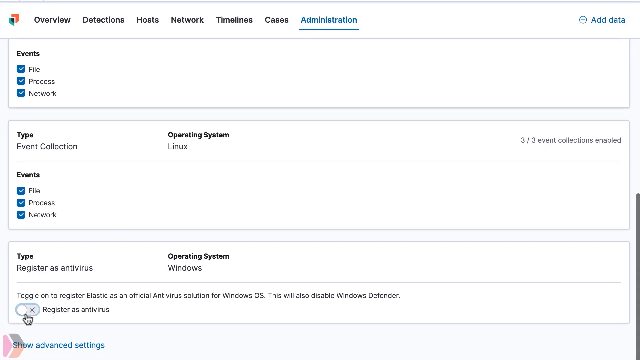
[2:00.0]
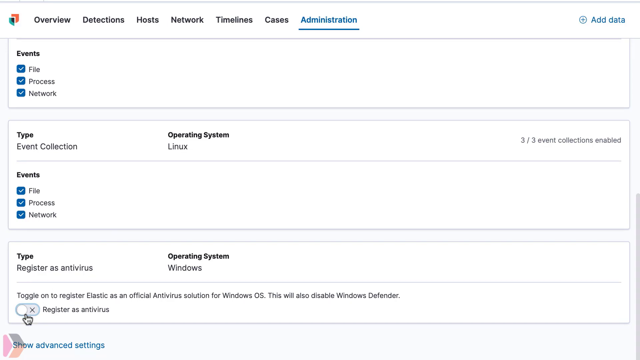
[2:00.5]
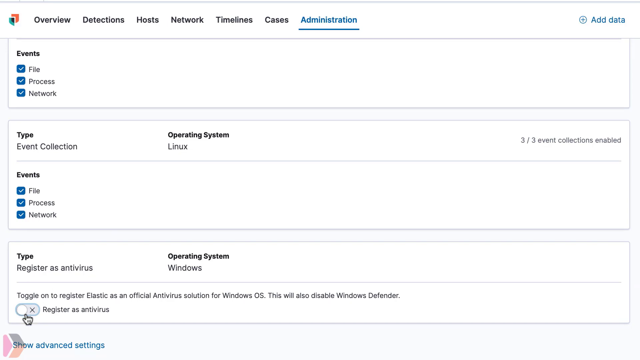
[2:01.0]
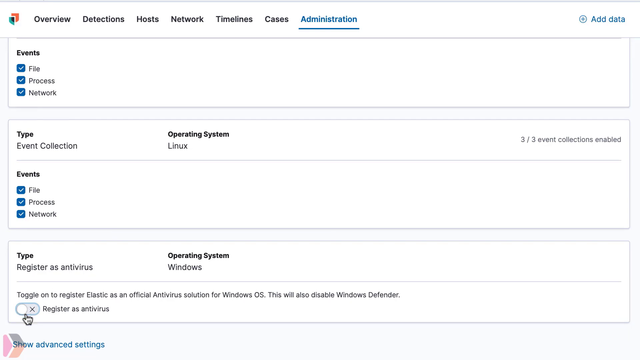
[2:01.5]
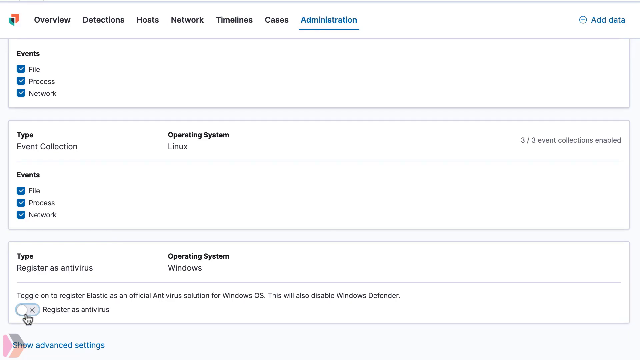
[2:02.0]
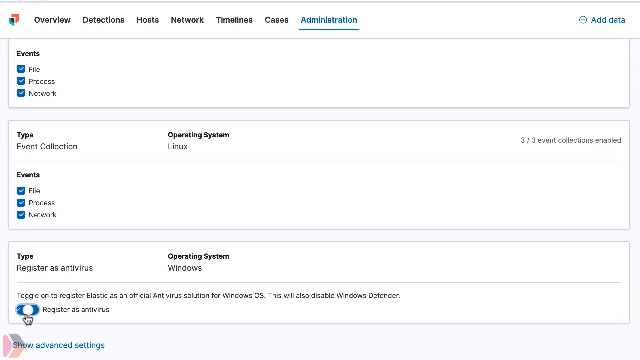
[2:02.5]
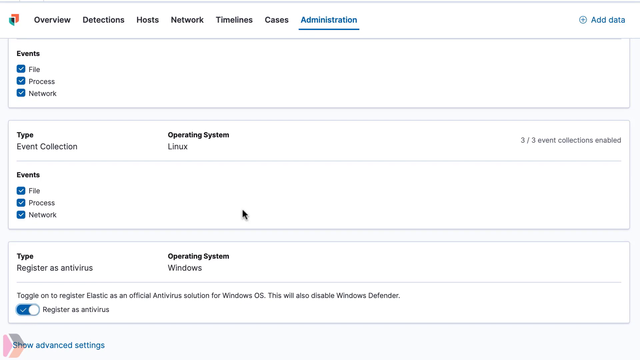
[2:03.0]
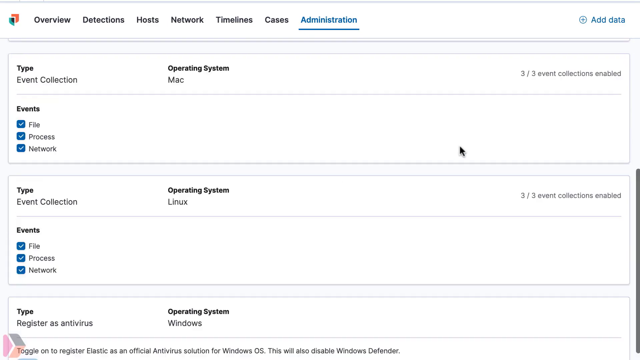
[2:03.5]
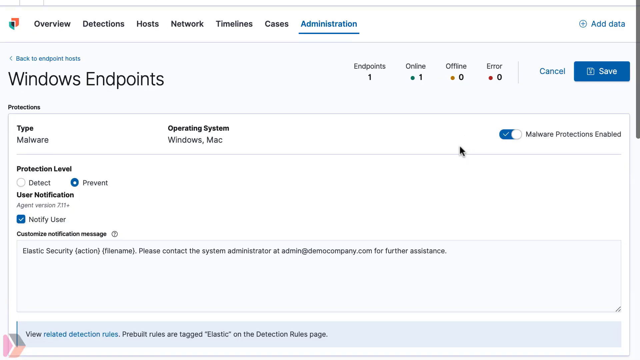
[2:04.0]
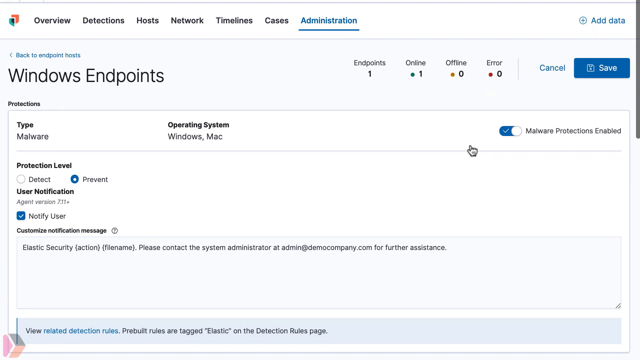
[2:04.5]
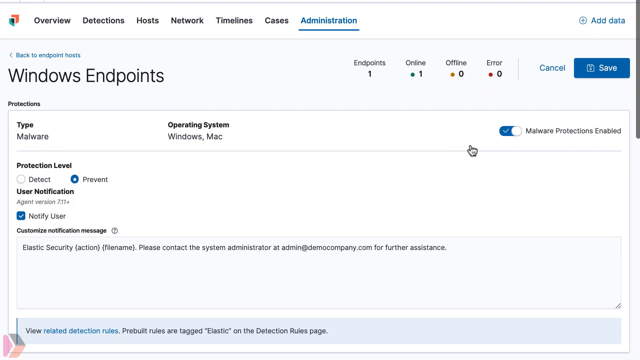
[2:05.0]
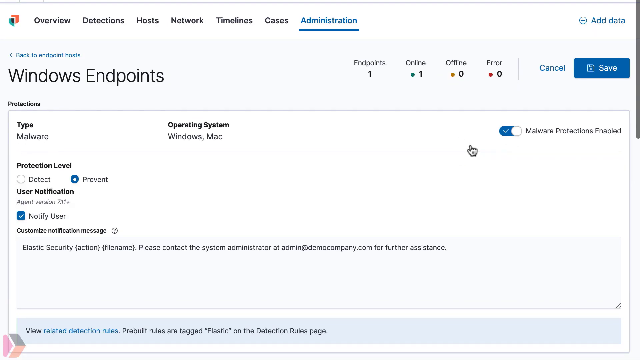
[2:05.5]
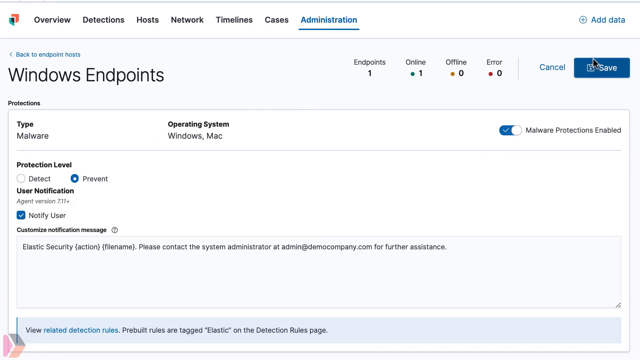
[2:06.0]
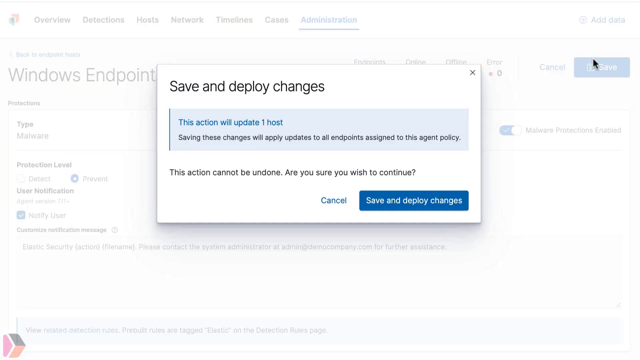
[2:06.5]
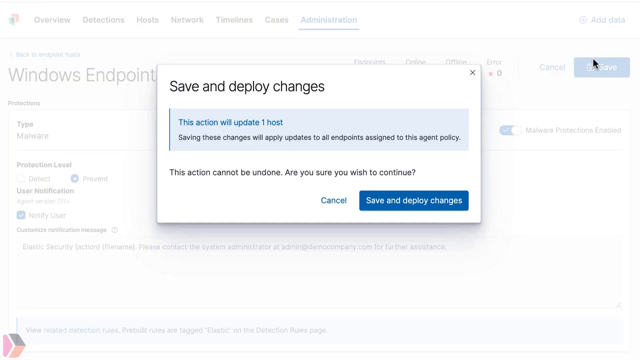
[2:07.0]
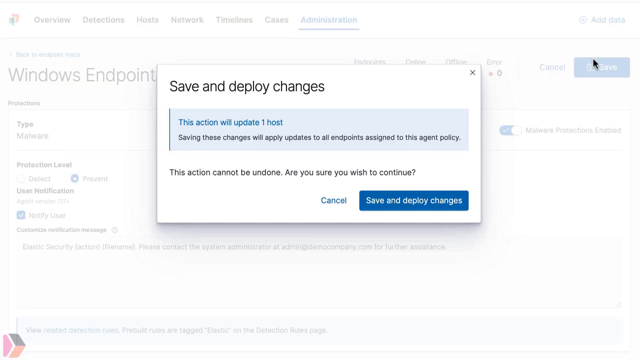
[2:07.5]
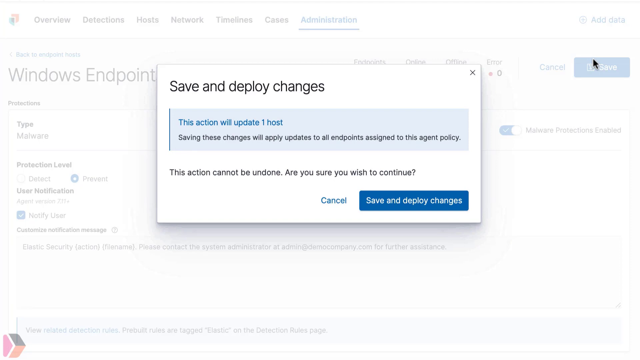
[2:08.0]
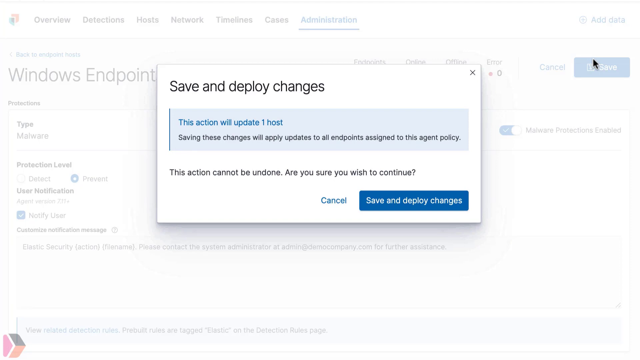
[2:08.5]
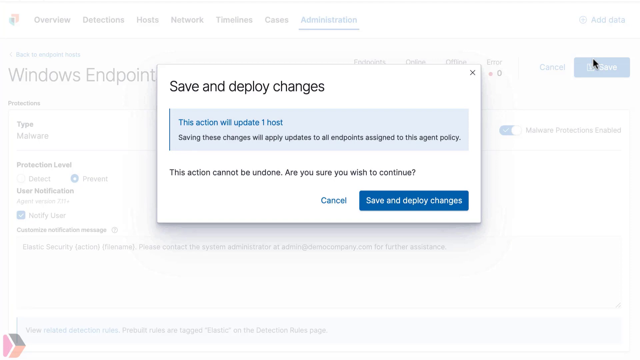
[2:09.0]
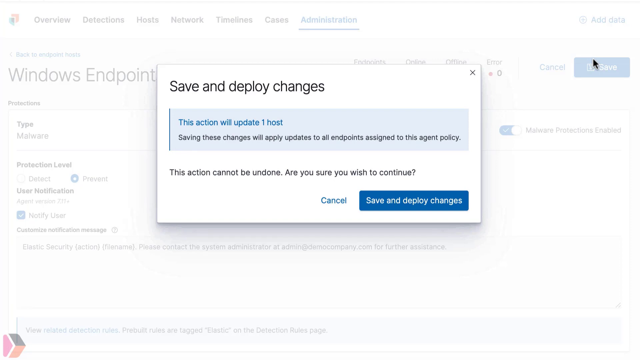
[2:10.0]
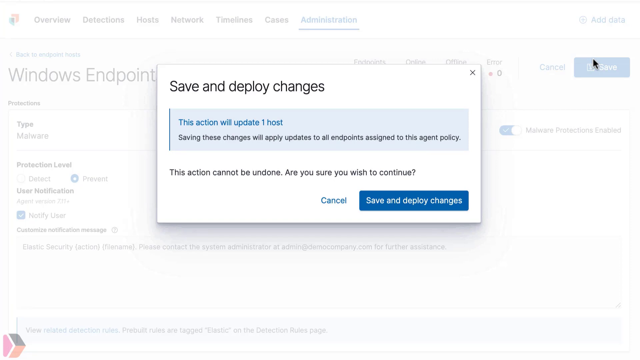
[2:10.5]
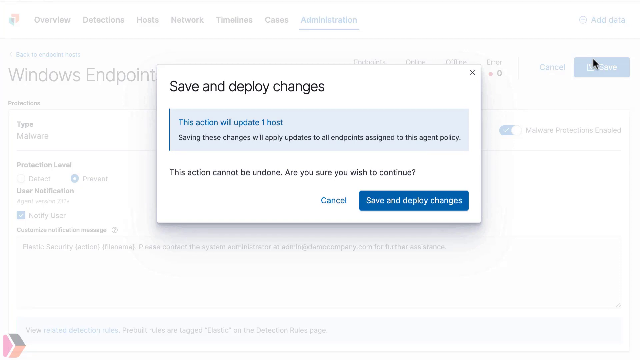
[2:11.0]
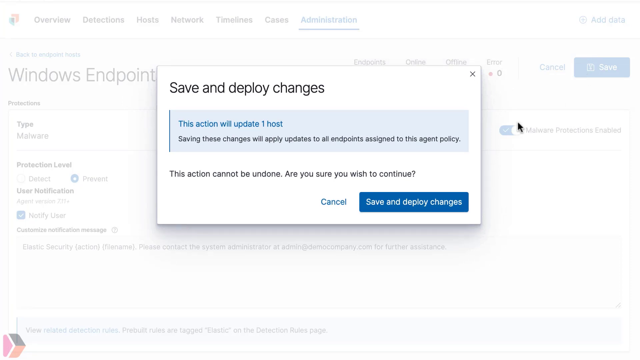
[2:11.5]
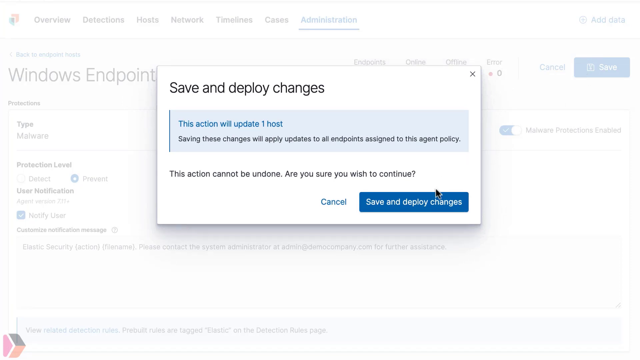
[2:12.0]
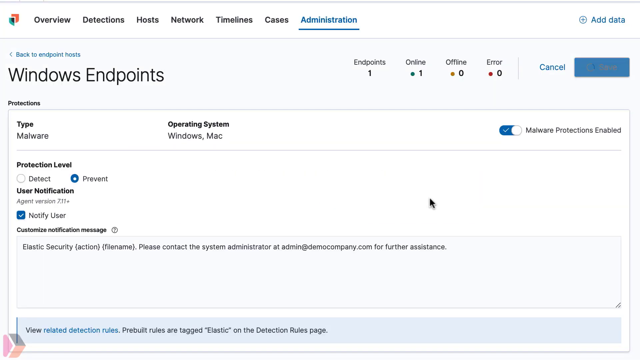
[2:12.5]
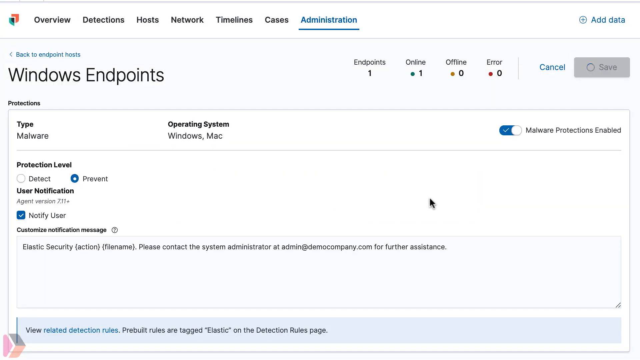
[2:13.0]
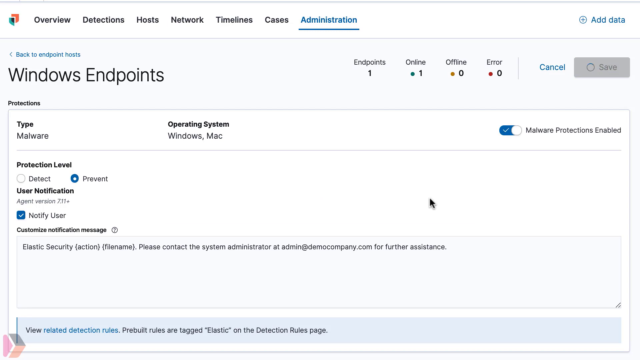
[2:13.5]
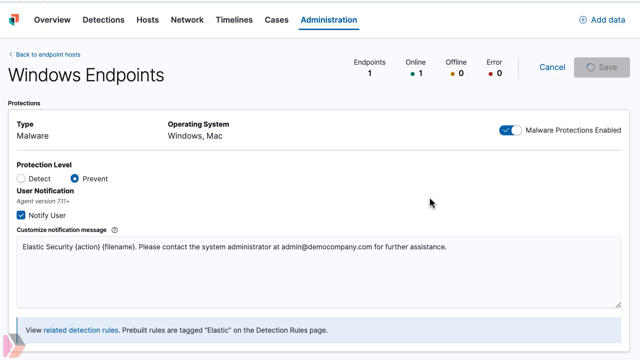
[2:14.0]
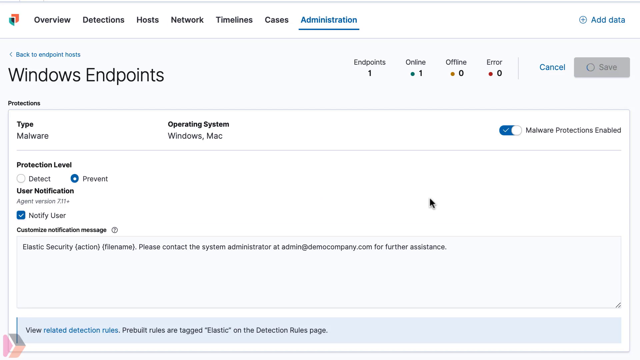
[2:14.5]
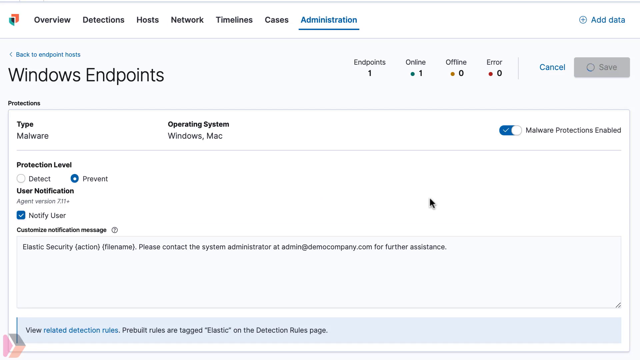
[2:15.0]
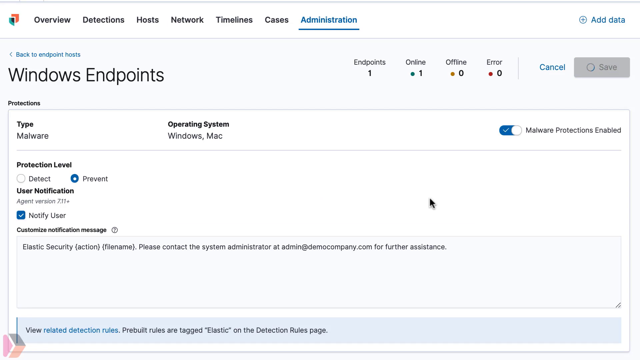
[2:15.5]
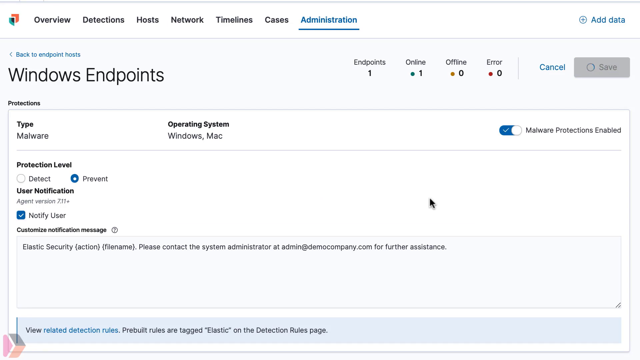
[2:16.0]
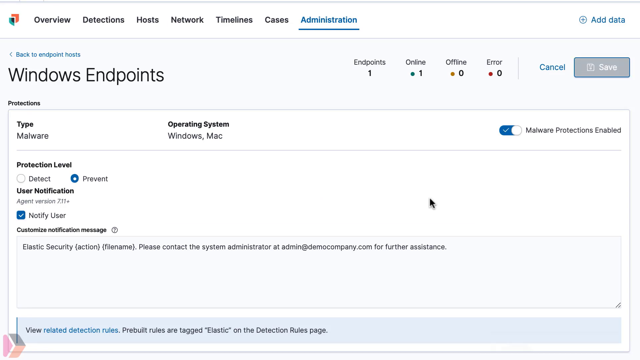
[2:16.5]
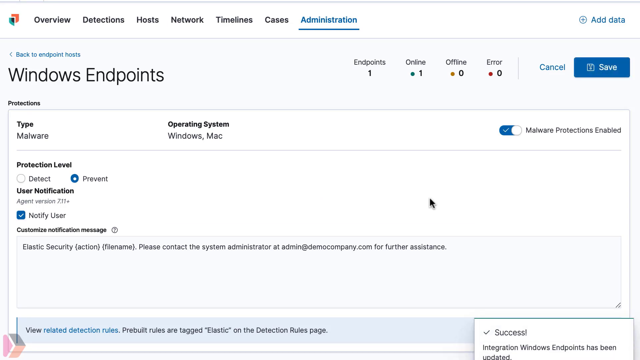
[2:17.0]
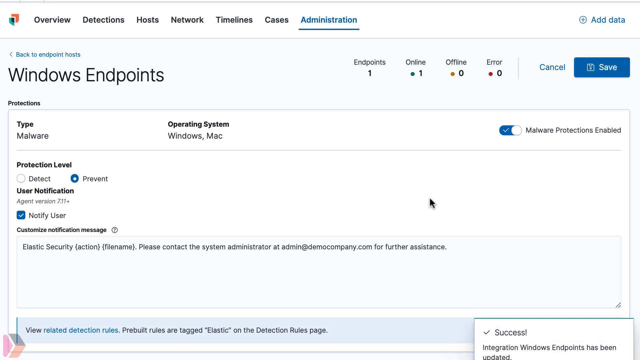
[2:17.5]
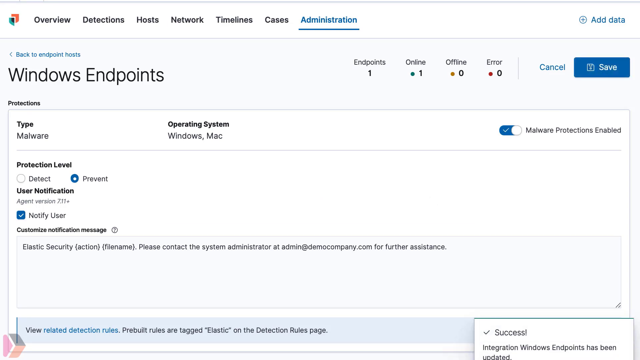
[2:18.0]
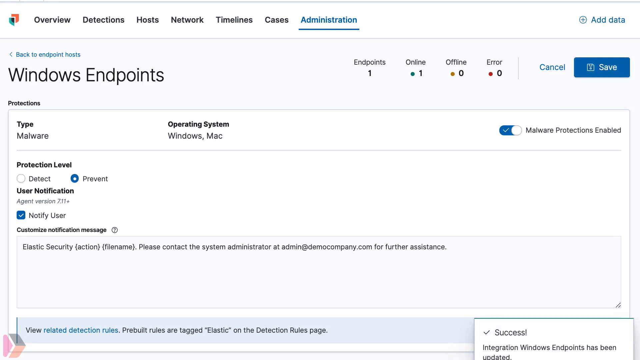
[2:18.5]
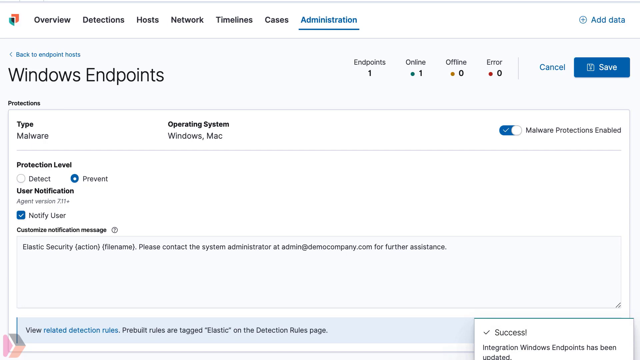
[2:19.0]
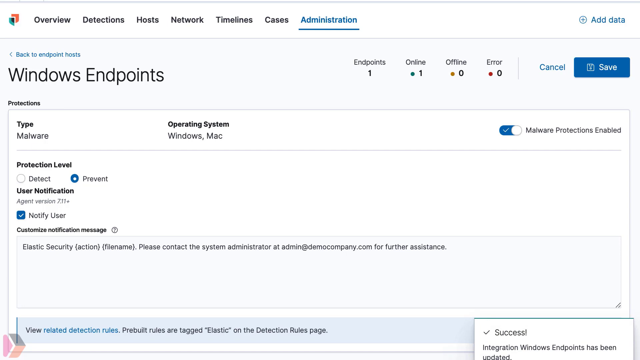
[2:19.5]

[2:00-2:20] The view scrolls back up very fast, and a box pops up titled "save and deploy changes", still on the administration tab. The box reads "this action will update one host. Saving these changes will apply updates to all endpoints assigned to this agent policy. This action cannot be undone. Are you sure you wish to continue?" Below is the word "Cancel" in blue letters, with a capital C and the rest lowercase, and to its right a solid blue rectangle with white words reading "save and deploy changes". The box has a small X in the top right corner. He clicks save, which leads to the next area showing type malware, operating systems Windows and Mac. At the top are endpoint one, online one with a blue star, offline zero with a gold star, and error zero with a red star. To the right of that line are the words "cancel" and "save", and underneath are the protections.